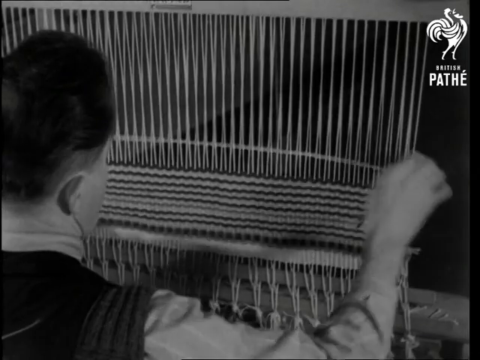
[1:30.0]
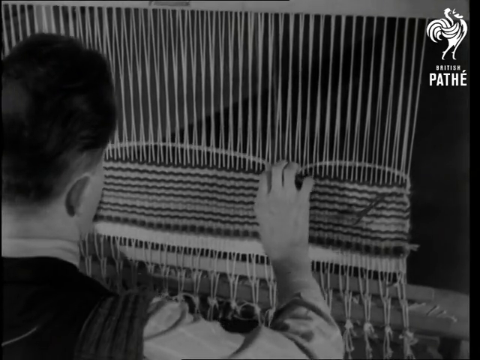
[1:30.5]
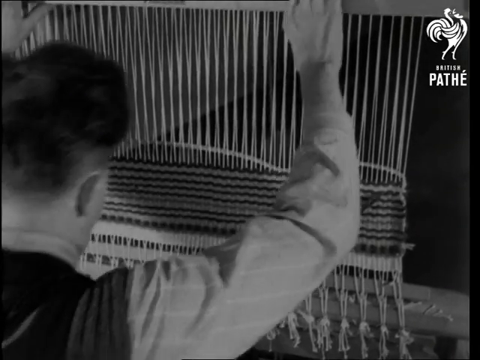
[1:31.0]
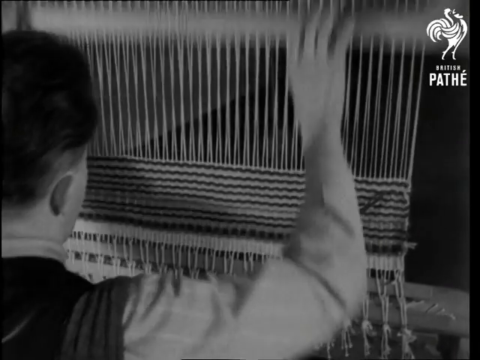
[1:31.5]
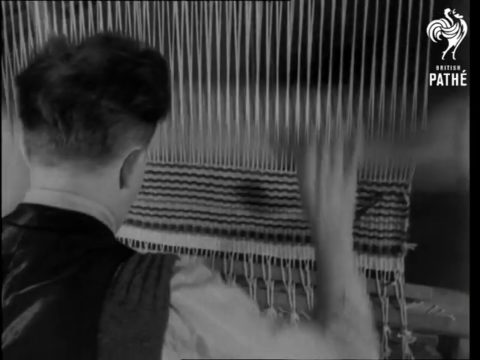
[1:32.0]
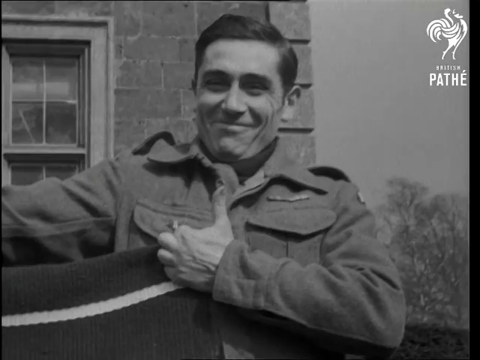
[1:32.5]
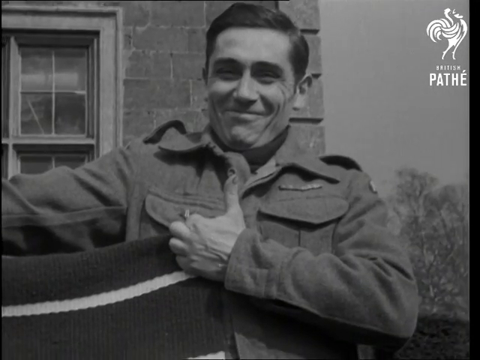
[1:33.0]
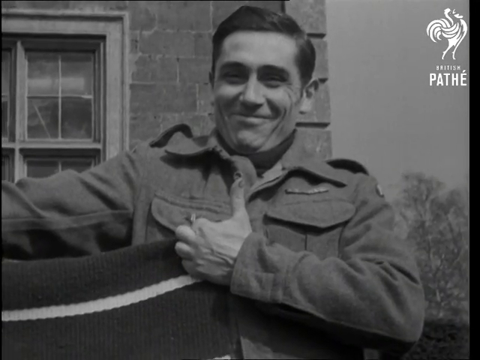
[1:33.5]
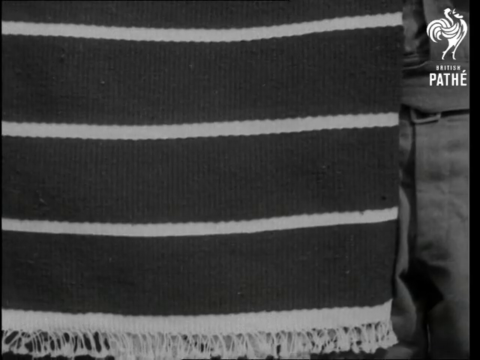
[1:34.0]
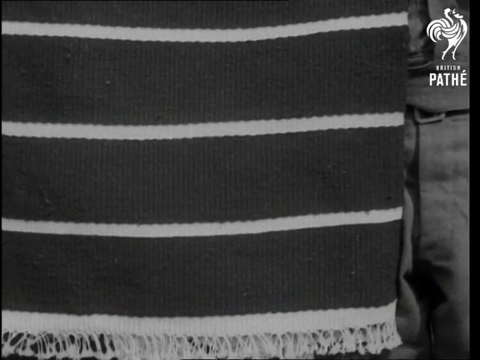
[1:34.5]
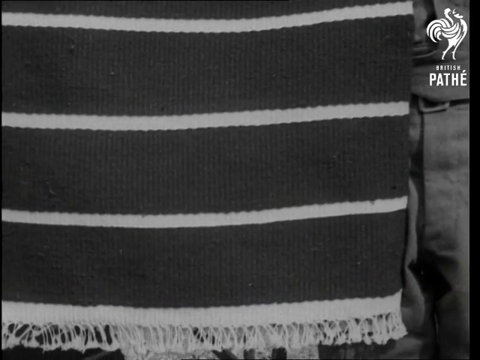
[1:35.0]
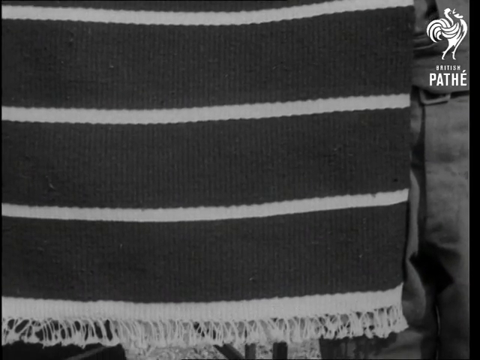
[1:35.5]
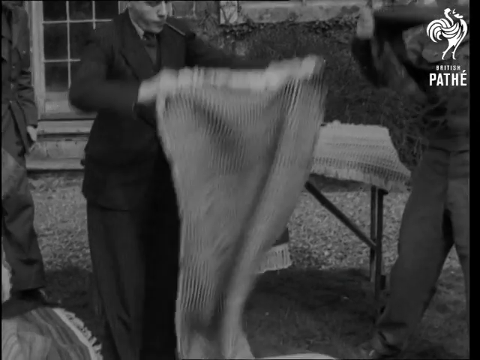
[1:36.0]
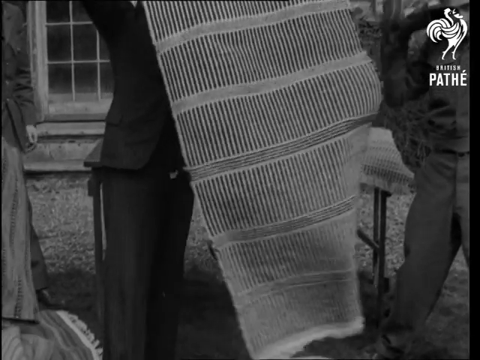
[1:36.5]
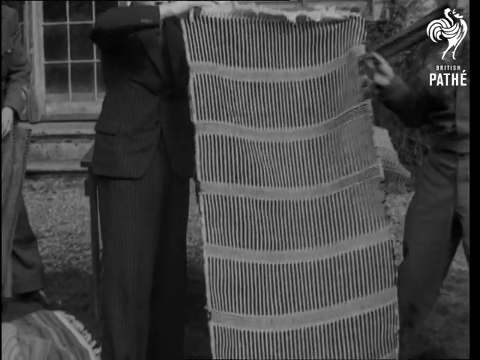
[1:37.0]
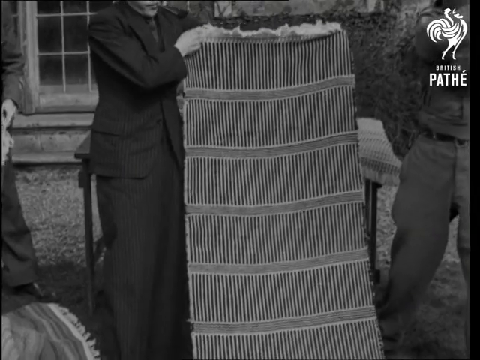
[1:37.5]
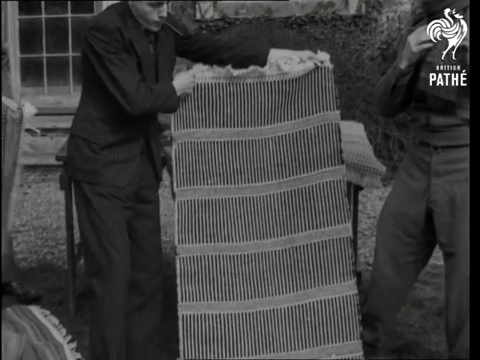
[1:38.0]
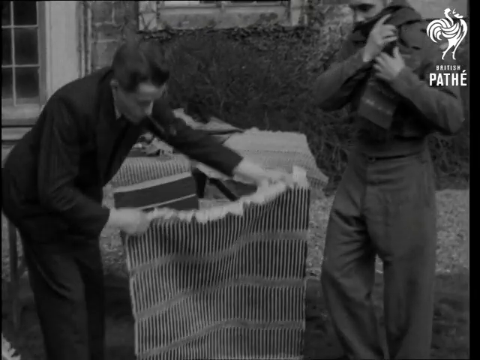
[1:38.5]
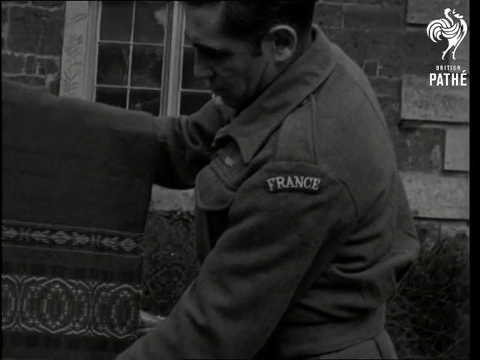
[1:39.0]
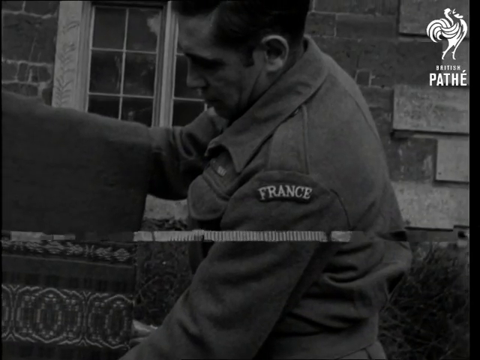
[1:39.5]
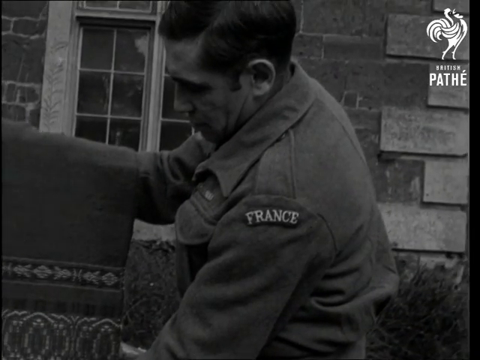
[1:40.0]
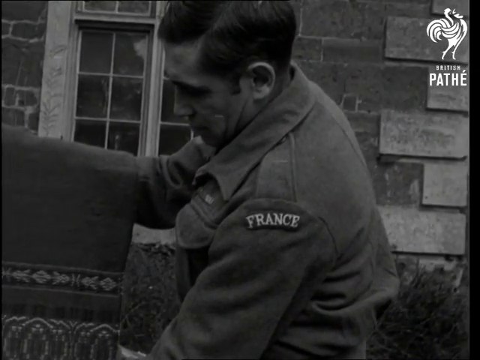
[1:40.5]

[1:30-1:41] The same man in the vest uses some type of mechanism to create a quilt or a rug, pulling the mechanism down quickly with two hands to lock certain threads into place. Next, a man with a smile on his face poses for a camera outside a brick building, holding some type of quilt or blanket and giving a thumbs up. The quilt or blanket is then shown: it is a dark color with white stripes. A few people outside fold these blankets, and finally the man in the France jacket holds one of the blankets with two arms.